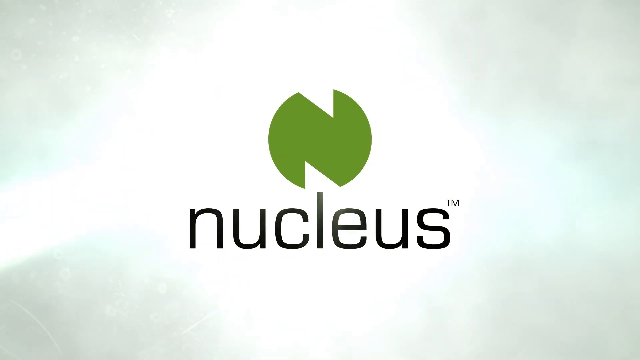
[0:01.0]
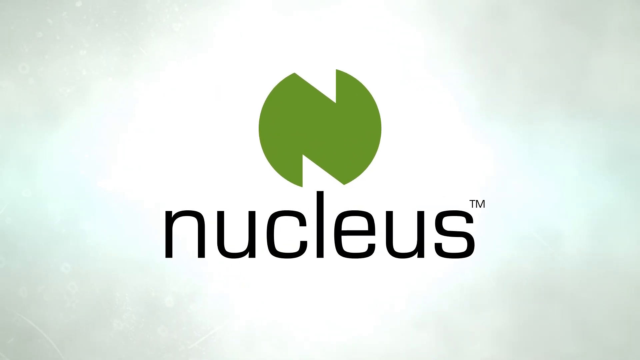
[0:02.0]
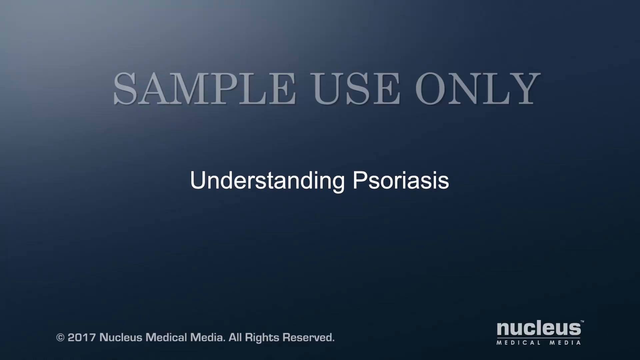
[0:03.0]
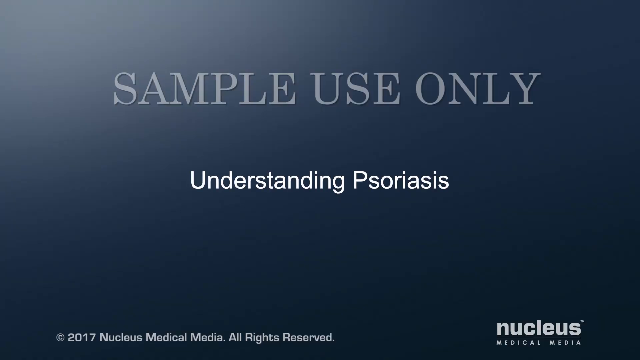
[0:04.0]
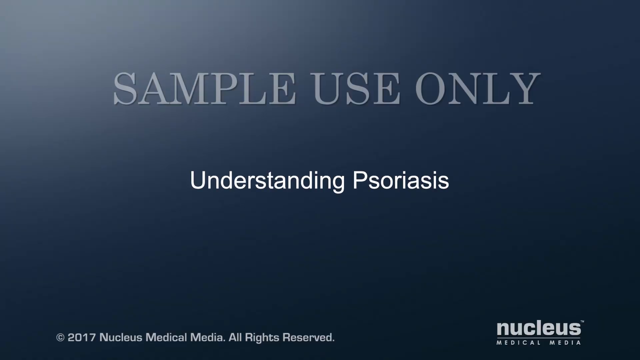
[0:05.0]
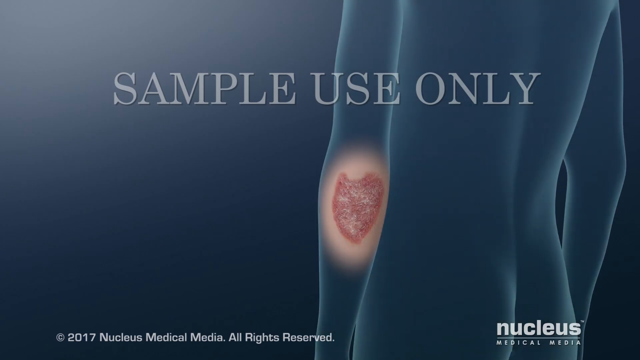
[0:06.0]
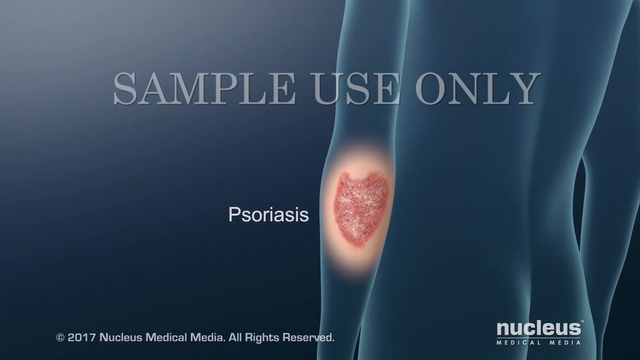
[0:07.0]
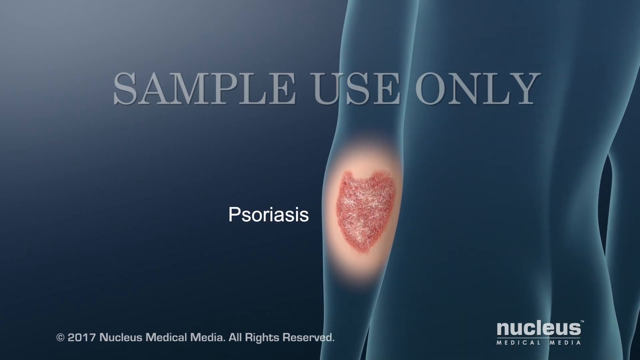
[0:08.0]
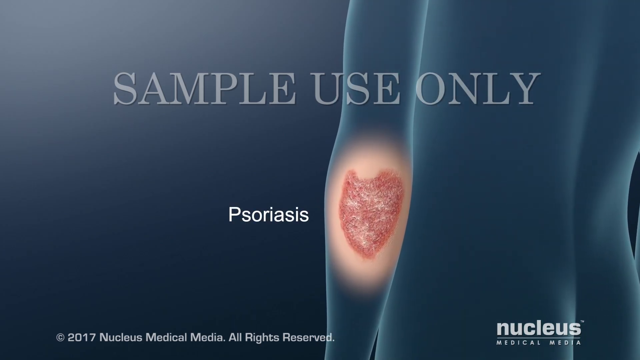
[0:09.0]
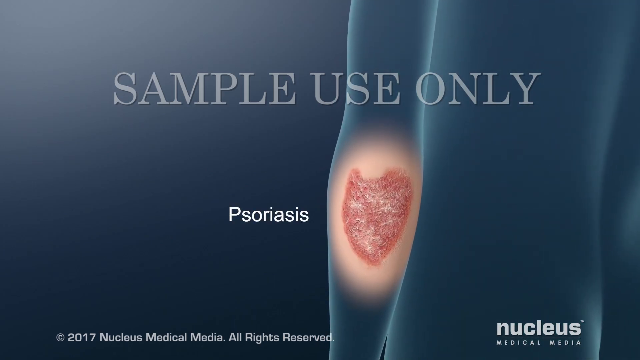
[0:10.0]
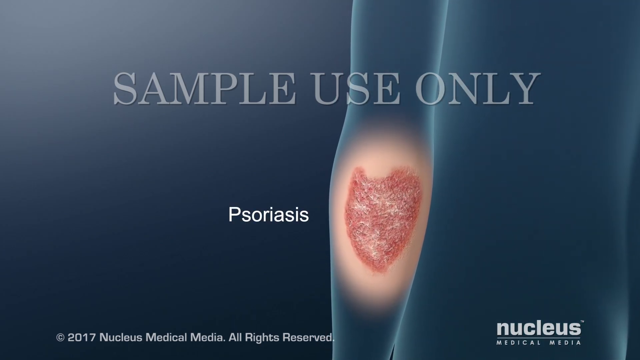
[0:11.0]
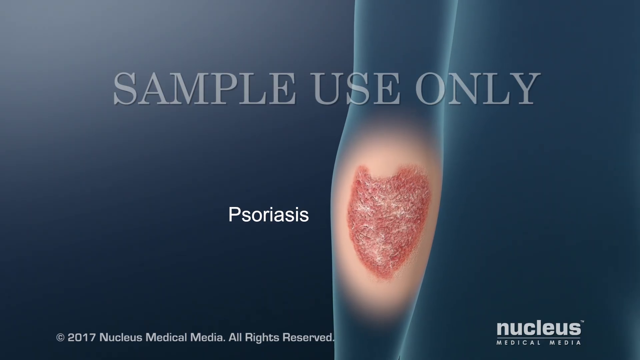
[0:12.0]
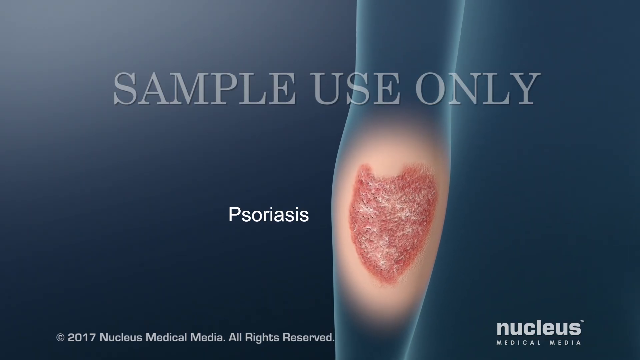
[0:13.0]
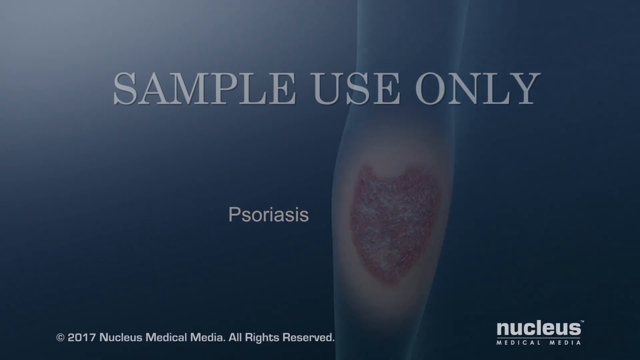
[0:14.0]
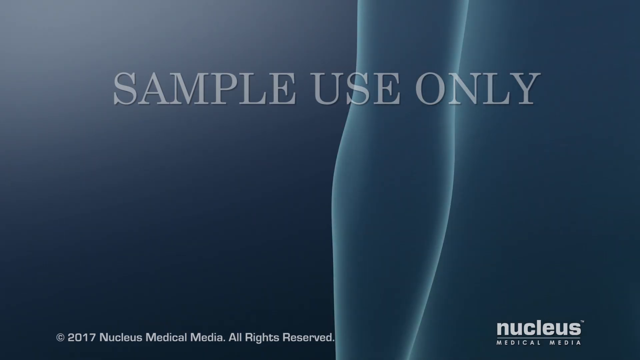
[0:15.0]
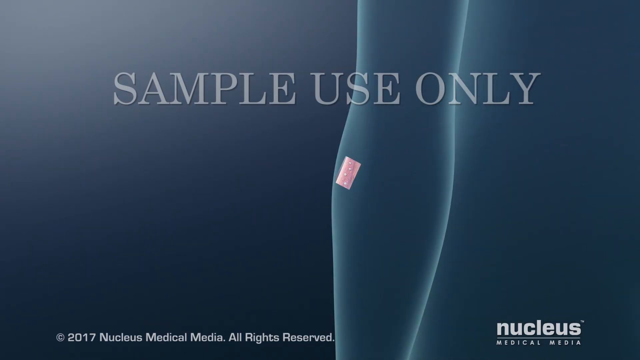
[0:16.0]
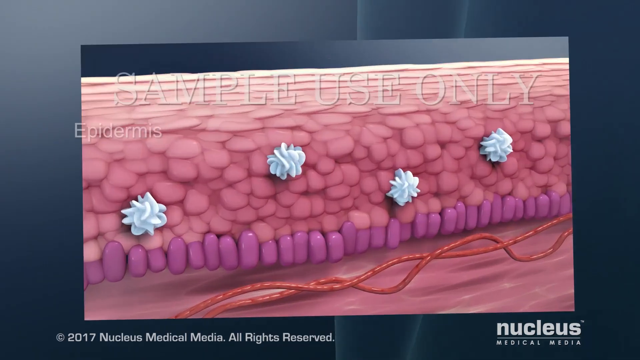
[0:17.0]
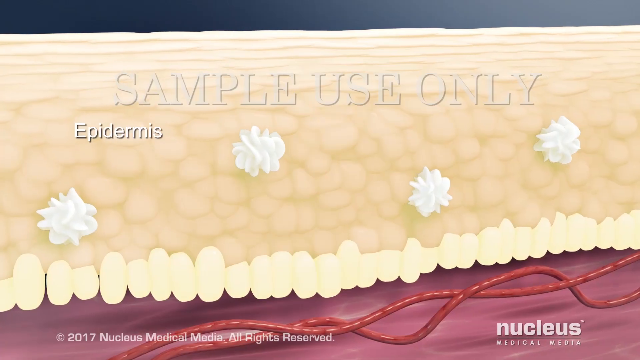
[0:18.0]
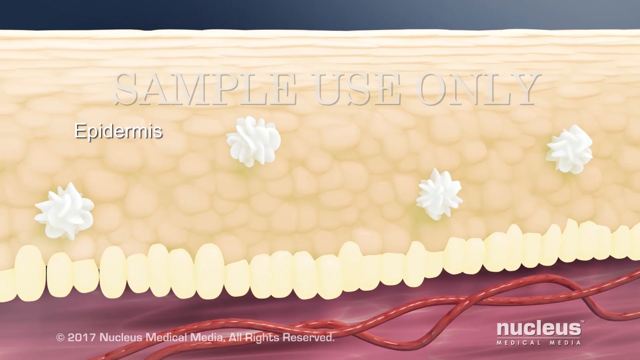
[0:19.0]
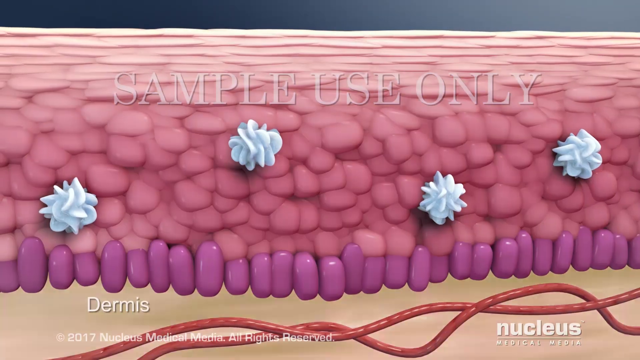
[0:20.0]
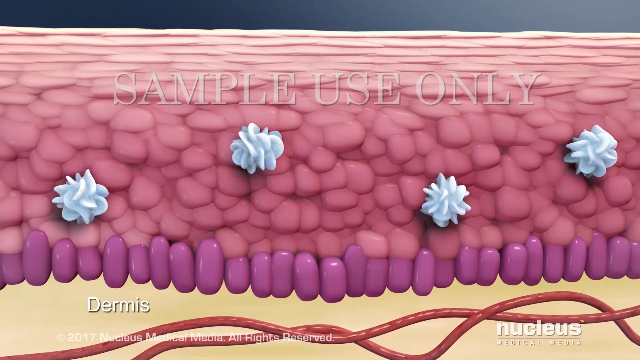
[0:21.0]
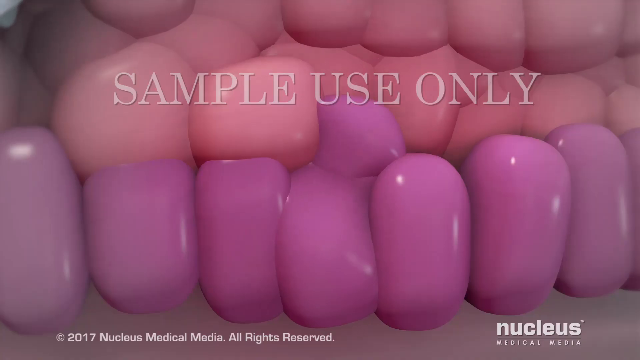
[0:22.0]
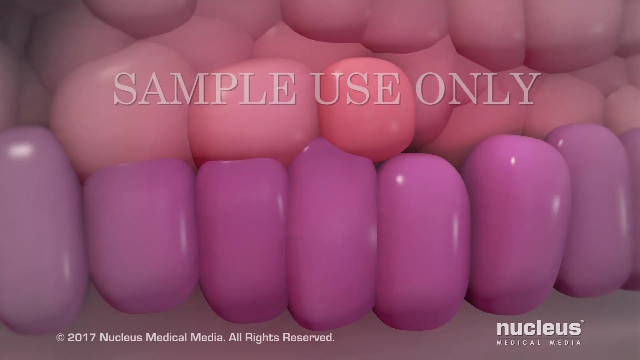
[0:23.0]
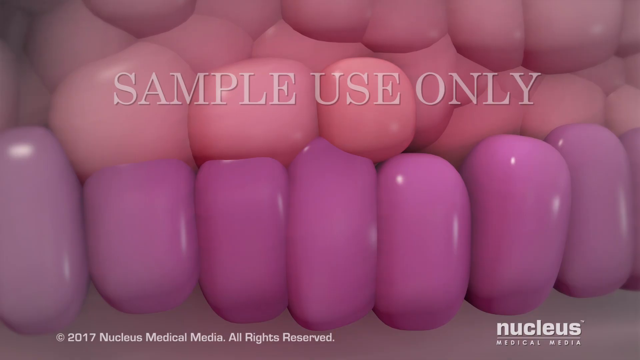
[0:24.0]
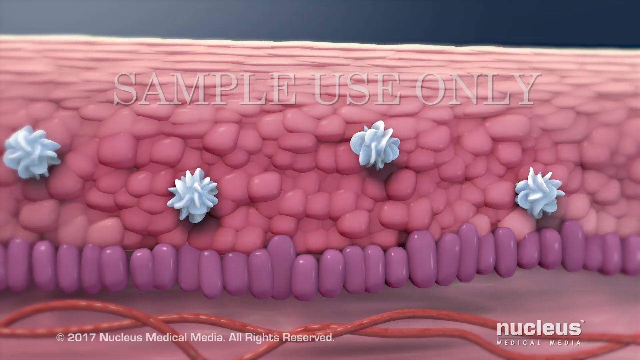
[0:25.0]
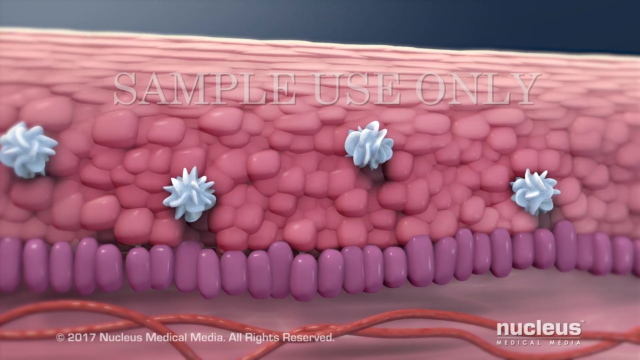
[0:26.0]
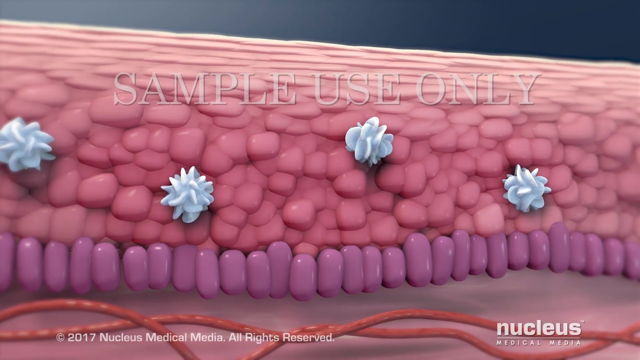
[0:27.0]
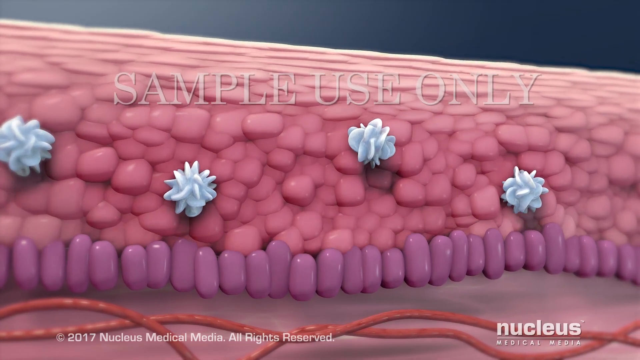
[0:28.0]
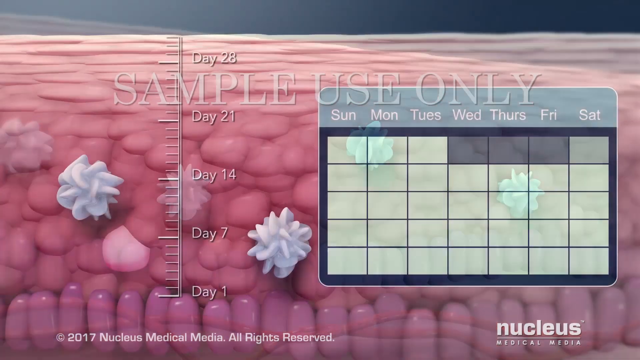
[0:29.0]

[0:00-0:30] The video appears to be a medical explanation of a skin condition called psoriasis, apparently from a company called Nucleus. It opens with the Nucleus logo, then shows "sample use only," and then a caption reading "Understanding psoriasis." A diagram of a human body follows, showing an infected area apparently around the elbow, on the back of the elbow. At the bottom of the screen, text indicates it was made in 2017 by Nucleus, and it says it is from Nucleus Medical Media. The animation seems to go through the stages of how a person gets psoriasis, showing day one to apparently day 14 before it cuts away. "Sample use only" remains on screen, possibly marking it as a training or informative video.